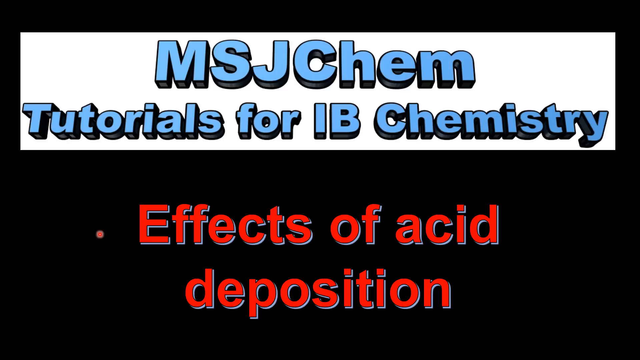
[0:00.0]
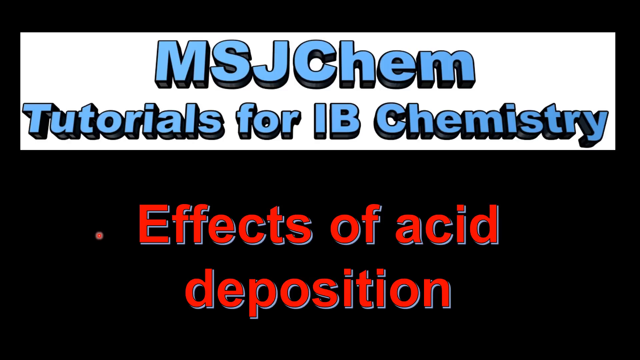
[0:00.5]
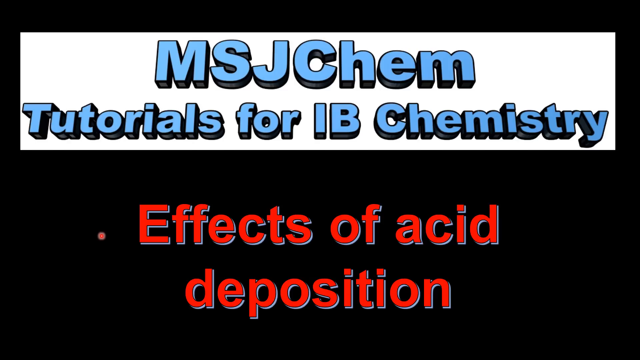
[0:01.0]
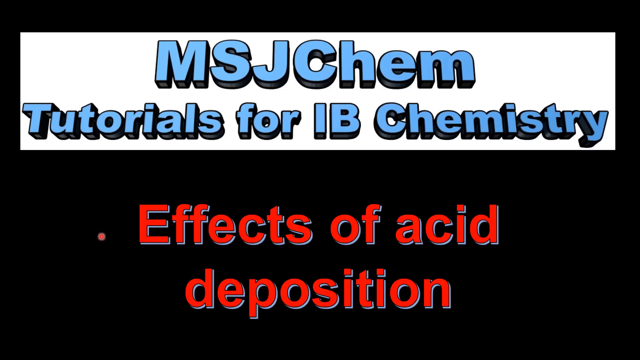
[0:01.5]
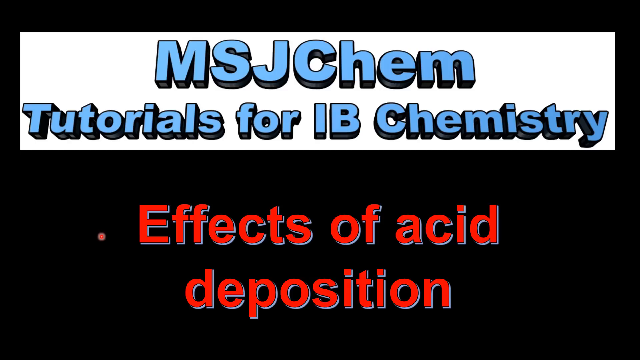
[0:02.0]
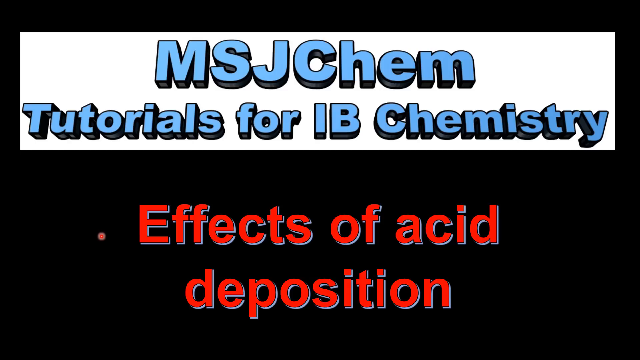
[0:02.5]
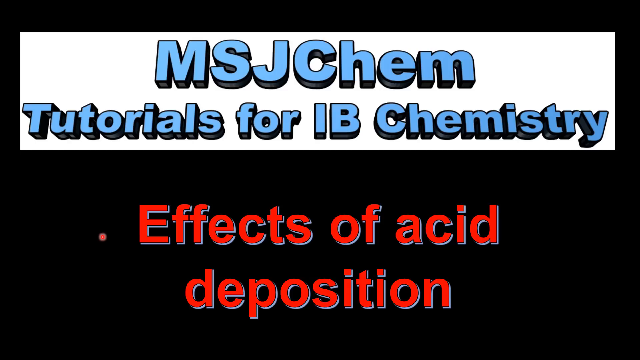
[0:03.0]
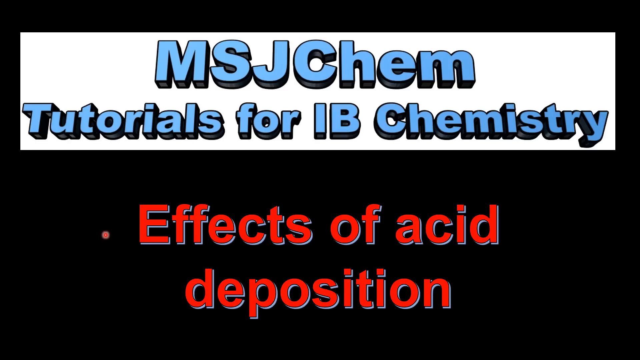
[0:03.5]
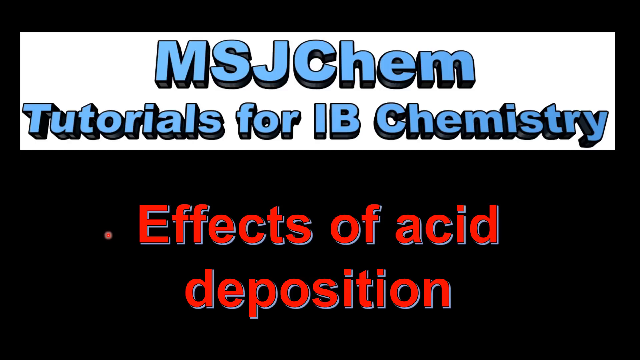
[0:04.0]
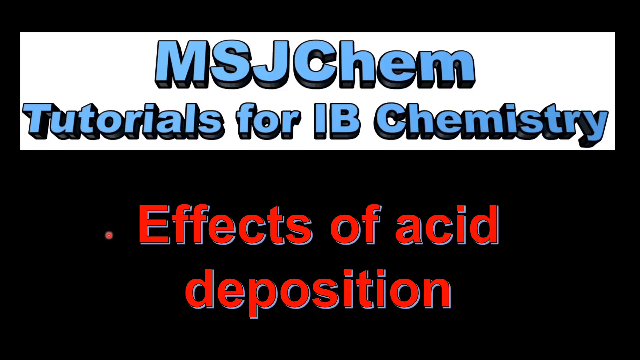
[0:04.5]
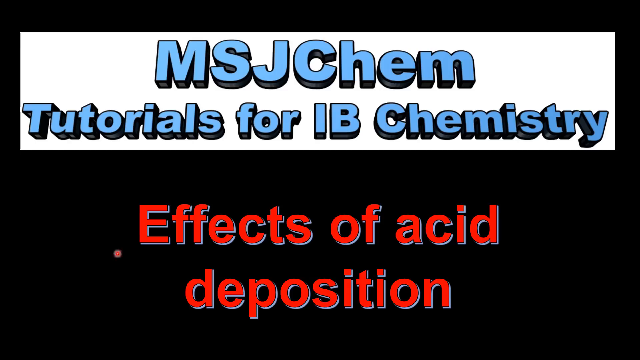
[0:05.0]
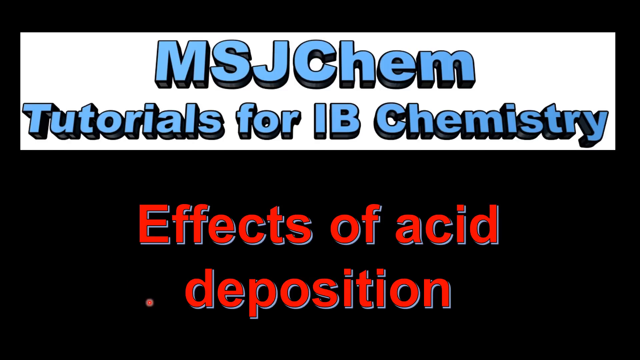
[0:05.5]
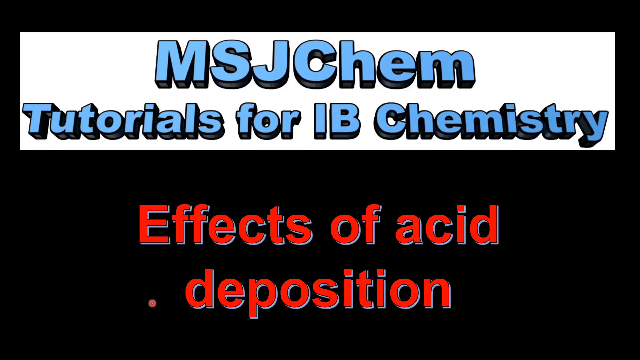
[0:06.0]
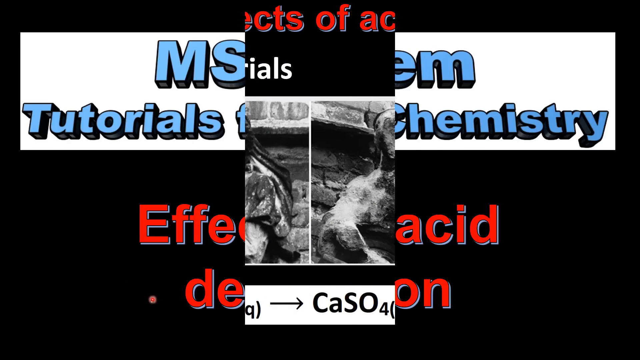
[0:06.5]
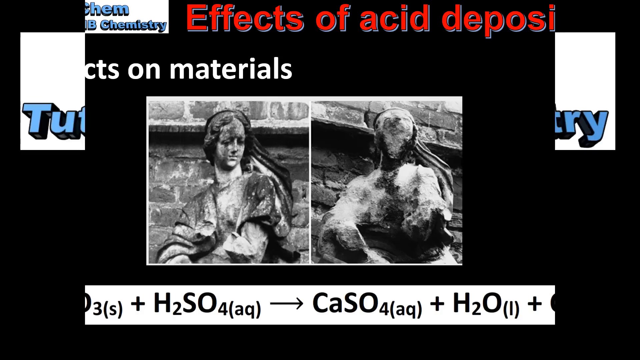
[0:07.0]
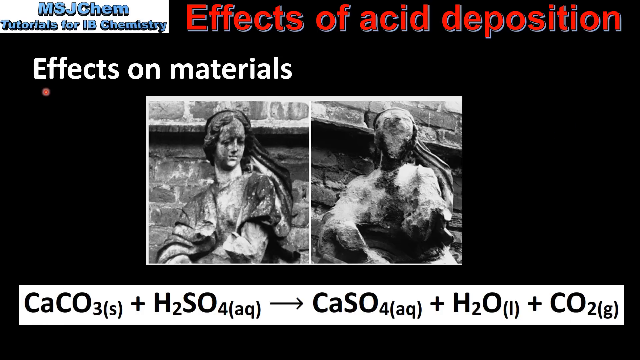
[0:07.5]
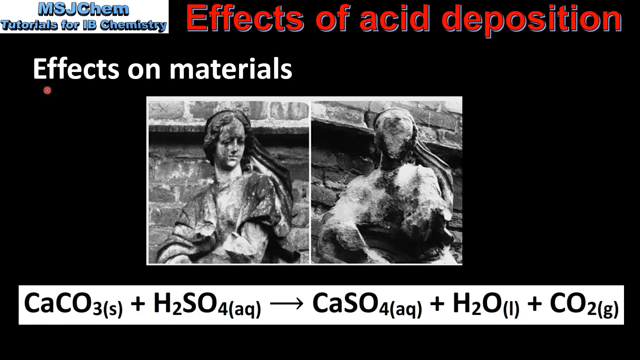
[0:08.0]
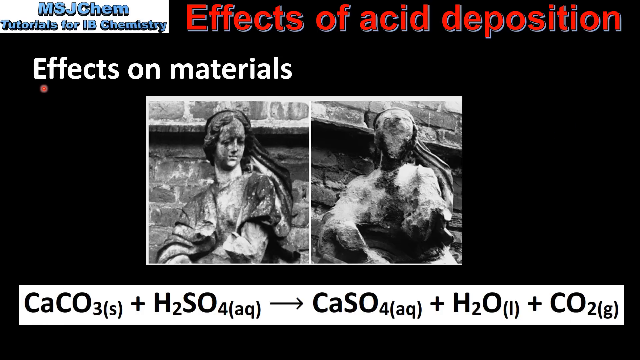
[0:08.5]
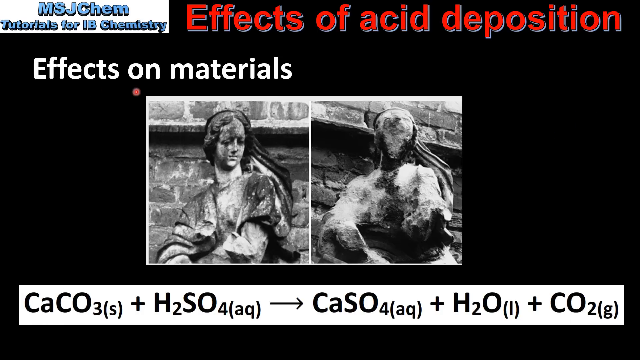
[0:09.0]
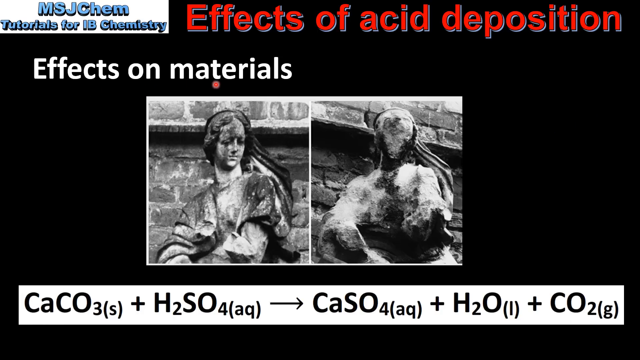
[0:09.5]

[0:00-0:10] An educational PowerPoint opens with the title "MSJ chem tutorials for IB chemistry" in blue font on a white background. At the bottom of the slide, red font on a black background reads "Effect of acid deposition." The presentation moves to a slide titled "Effect of acid deposition" in red font on a black background. Below it is white font on a black background, and then a picture of a statue that looks like it has been withered and weathered by the elements outside. The picture seems to show a before and after, with the after version a little rougher around the edges.